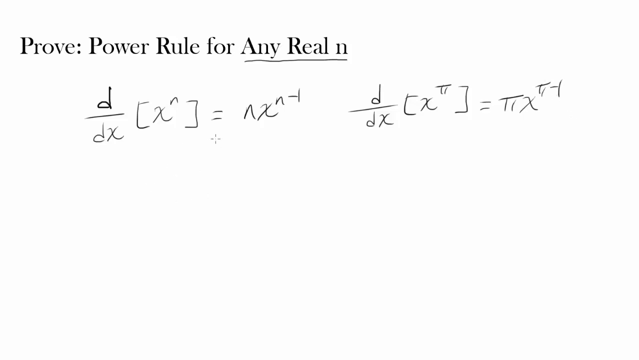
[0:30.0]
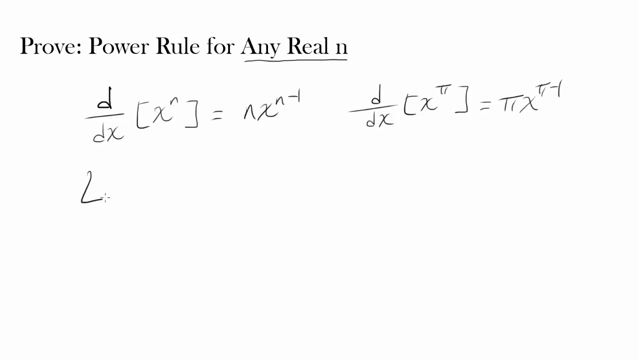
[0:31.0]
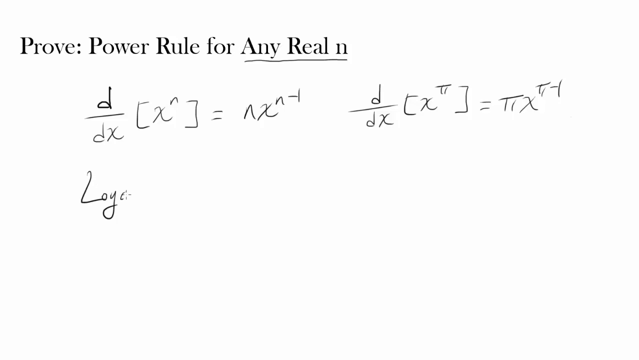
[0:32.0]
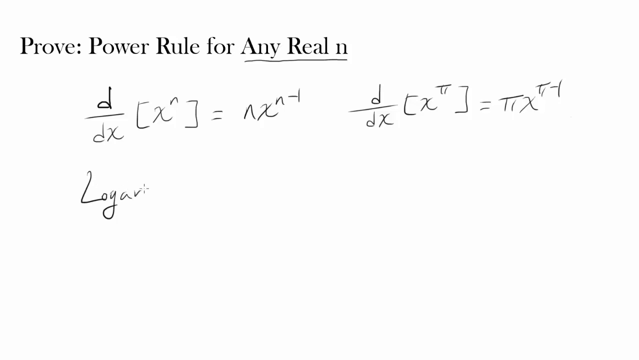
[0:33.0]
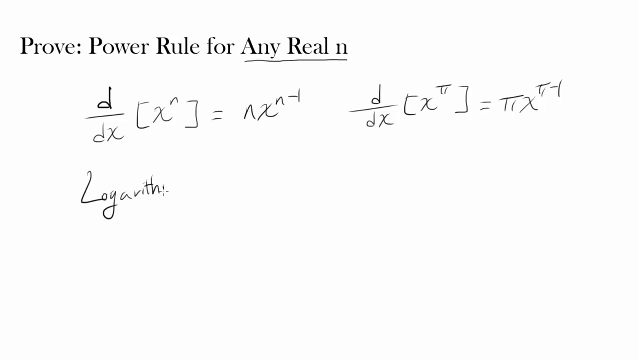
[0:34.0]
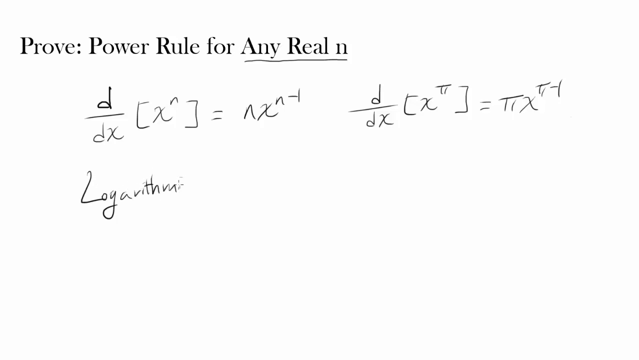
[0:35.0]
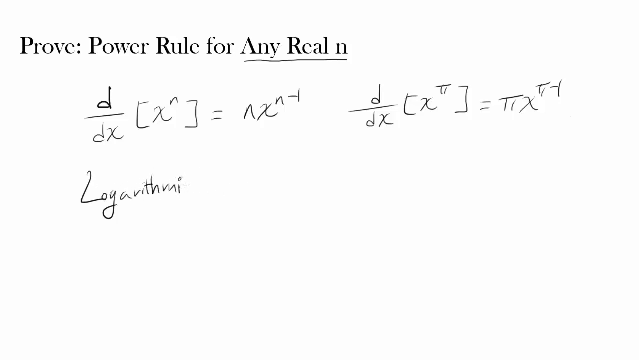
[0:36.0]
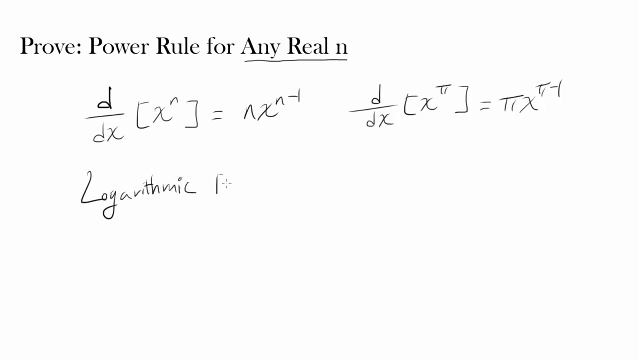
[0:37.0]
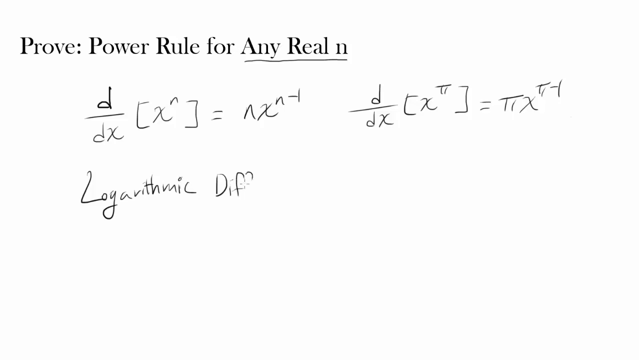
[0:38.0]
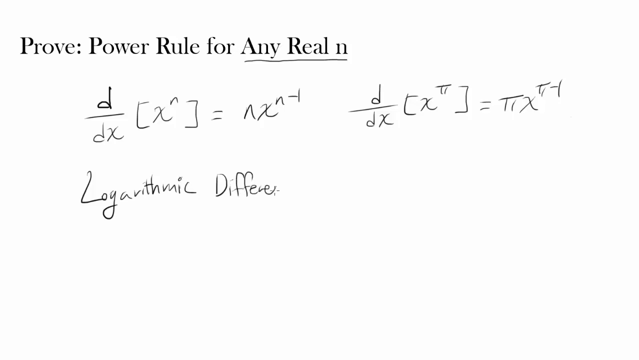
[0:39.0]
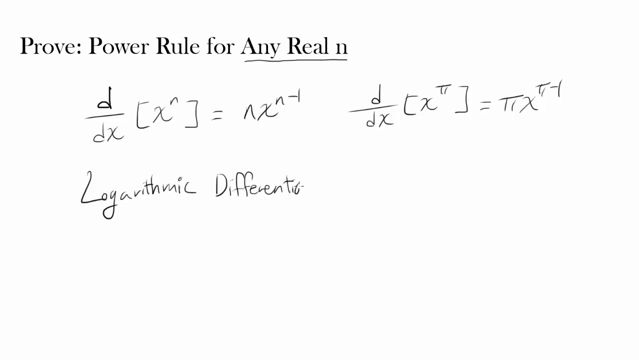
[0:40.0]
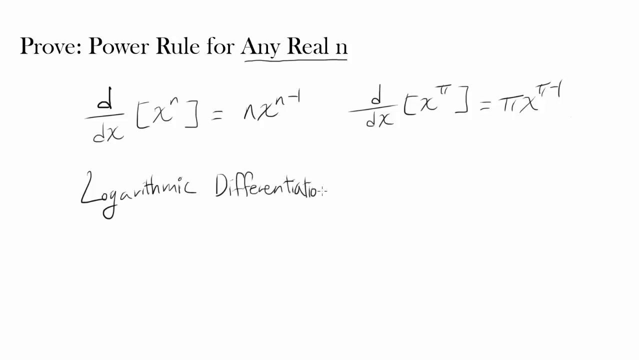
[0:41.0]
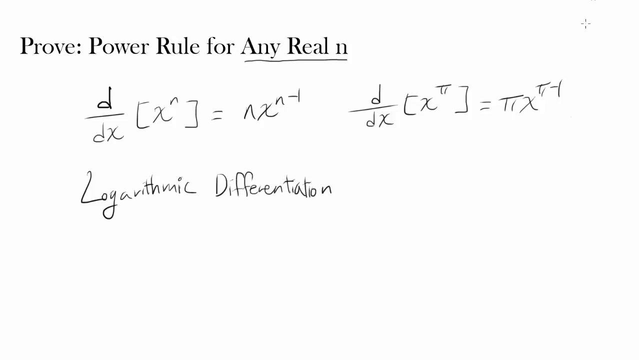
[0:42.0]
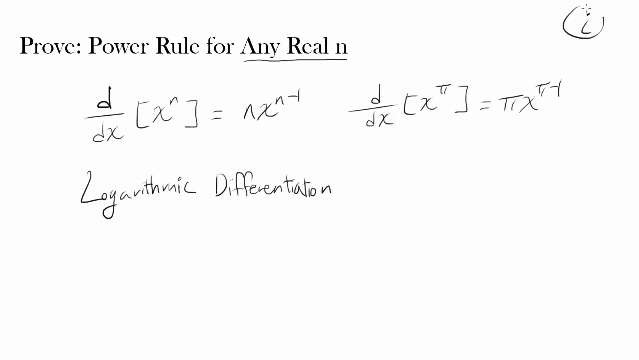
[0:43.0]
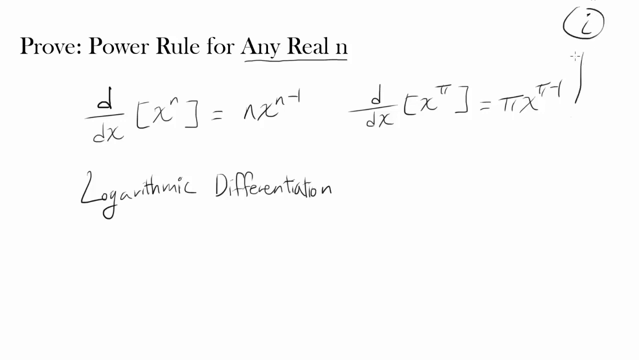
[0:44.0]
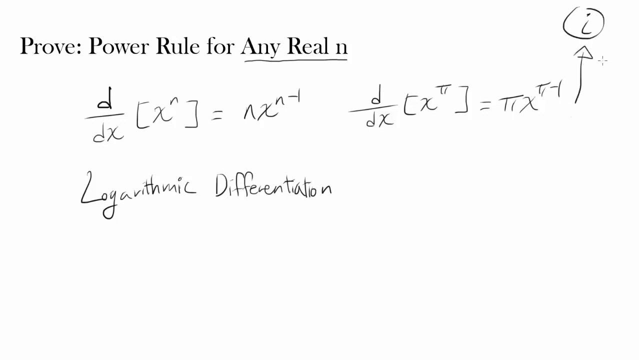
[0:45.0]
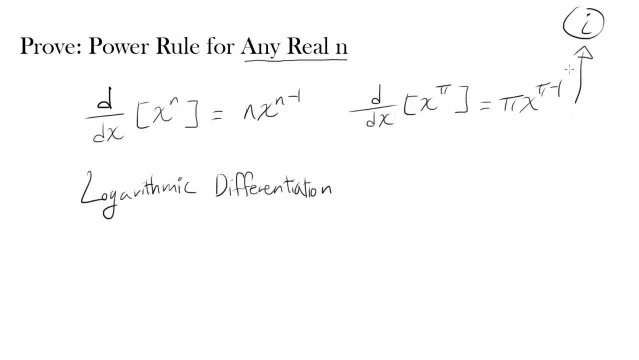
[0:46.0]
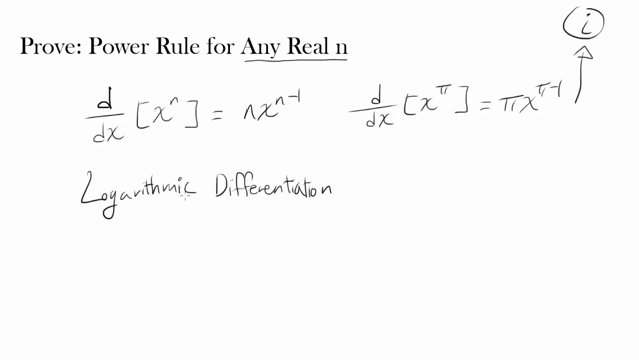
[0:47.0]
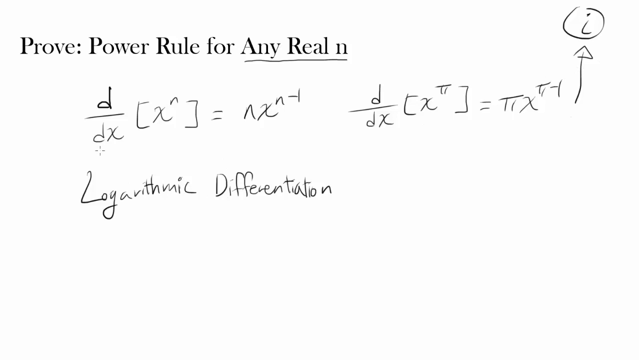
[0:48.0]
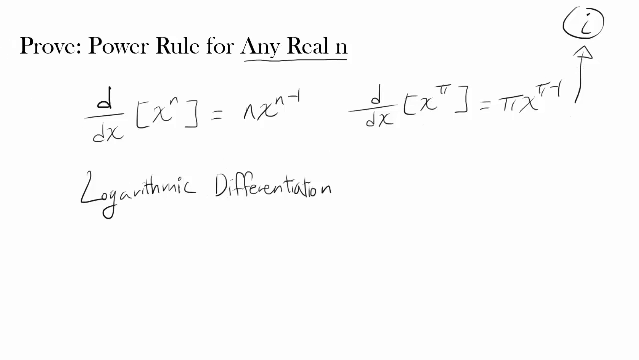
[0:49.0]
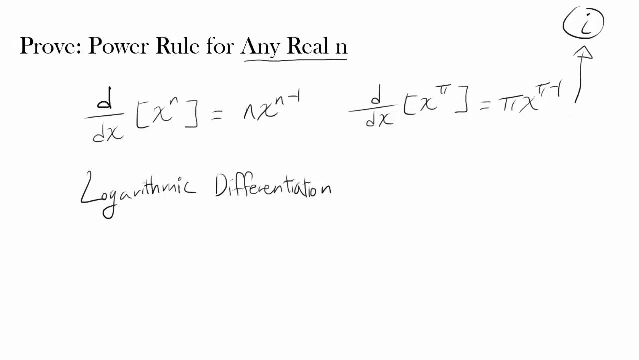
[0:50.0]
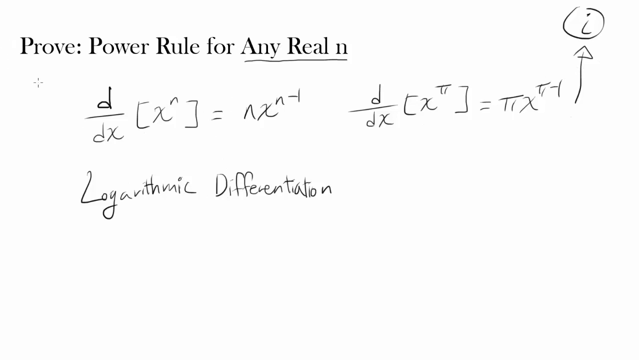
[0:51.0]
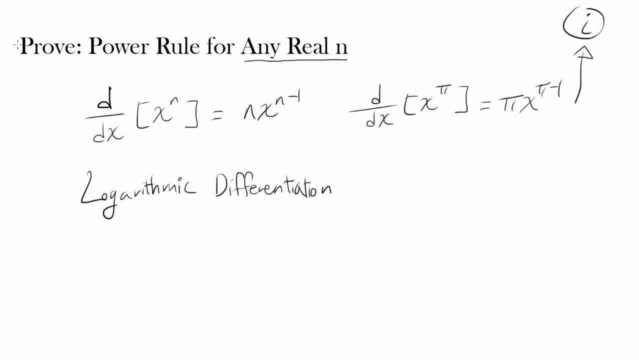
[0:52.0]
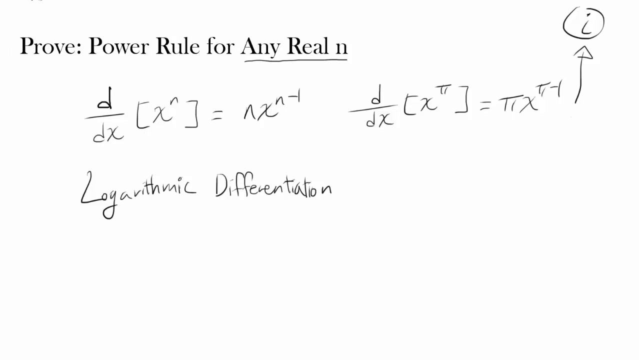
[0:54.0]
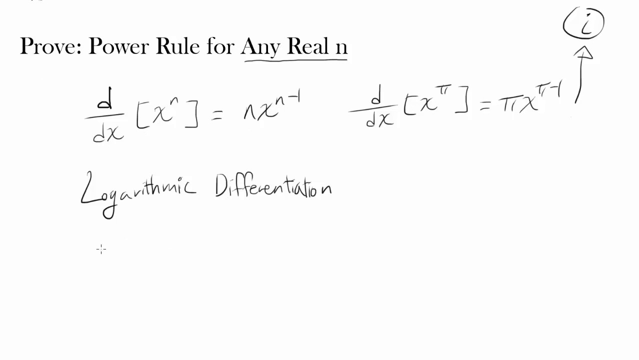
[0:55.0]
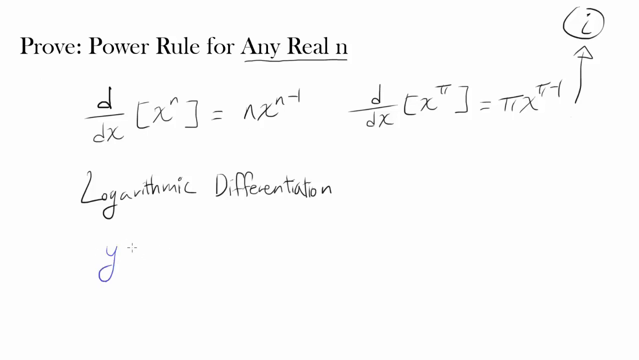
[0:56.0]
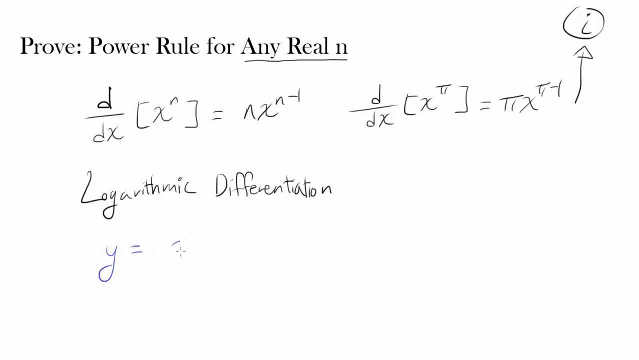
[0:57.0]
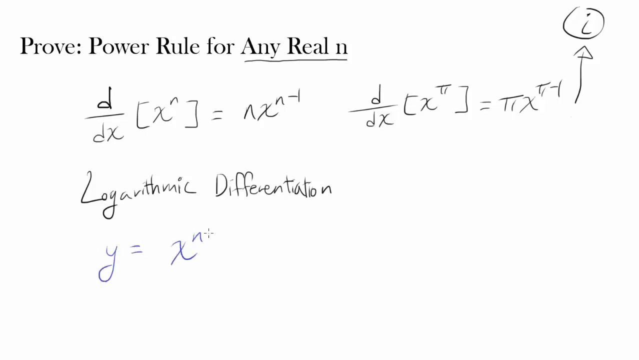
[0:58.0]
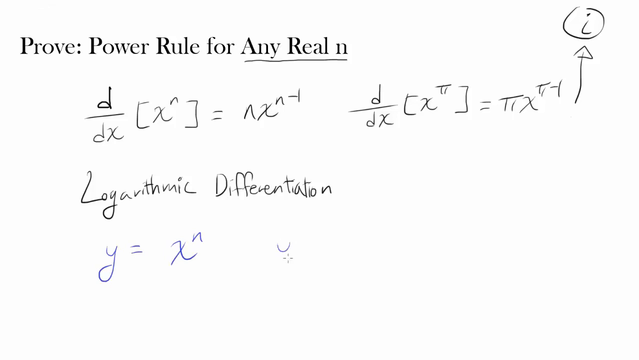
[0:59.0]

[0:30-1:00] A whiteboard has very fine writing, with the heading at the top reading "Prove; Power Rule for Any Real n". The writing is done by a small cursor that looks like it is shaped like a cross, with a line at each corner and white in the middle, so there is a box at each corner. The first equation is a small d over an x, a bracket, x, a, a bracket, two lines over each other for equals, then a small n, a small x, a small a and t. The second equation is a small d over dx, a bracket, x with a Roman numeral two, a bracket, an equals sign, then letters with a small t-1 at the top right. On the right, an arrow, a line with a triangle on top, points up to a small i with a circle around it, the top of the circle slightly open.